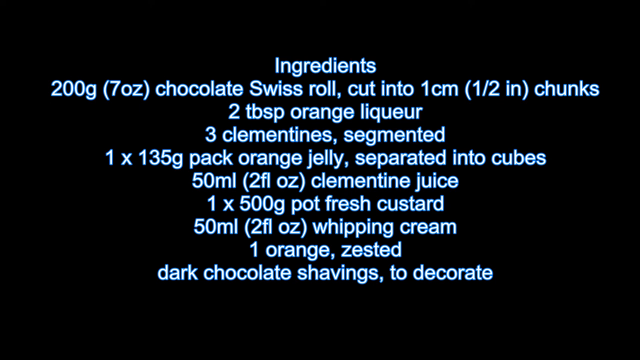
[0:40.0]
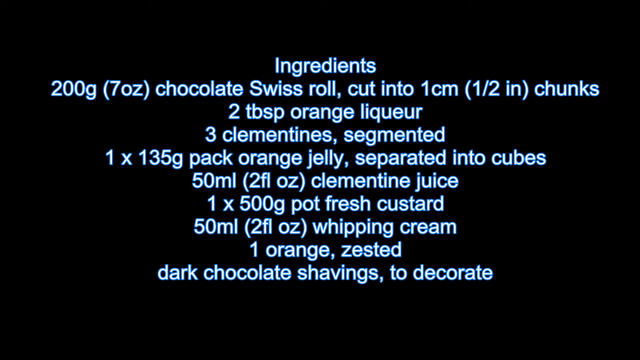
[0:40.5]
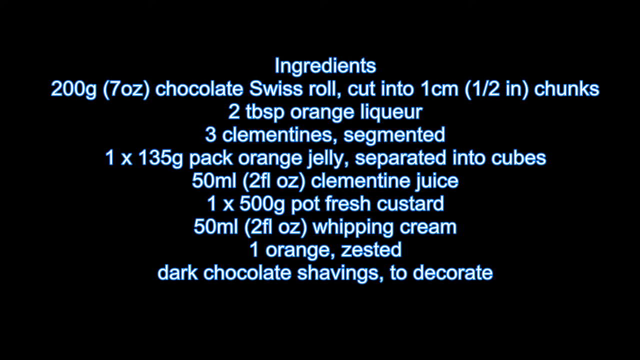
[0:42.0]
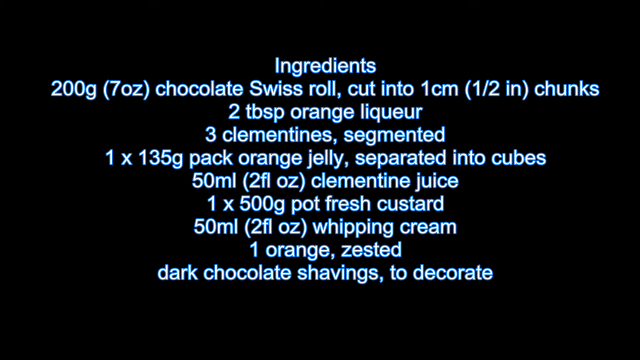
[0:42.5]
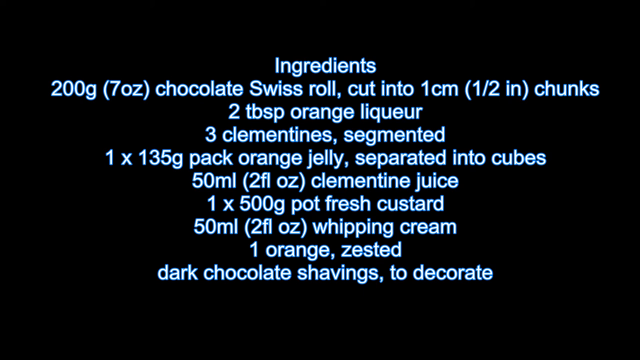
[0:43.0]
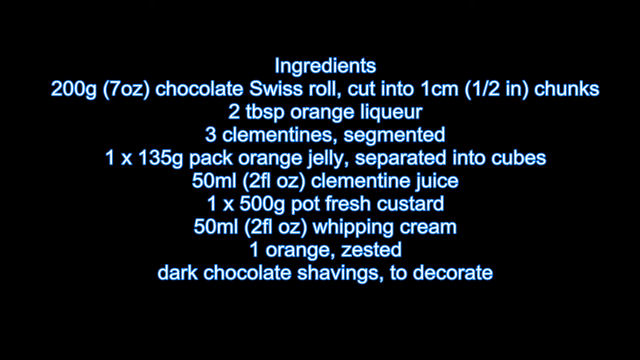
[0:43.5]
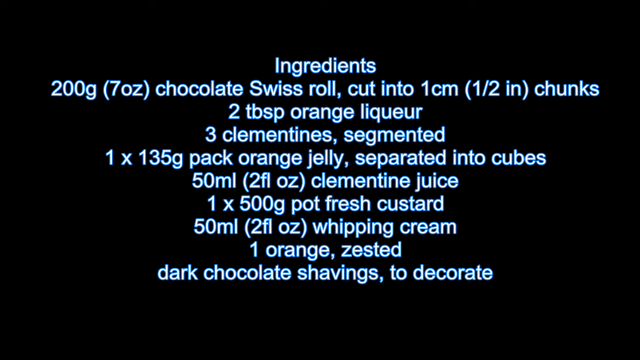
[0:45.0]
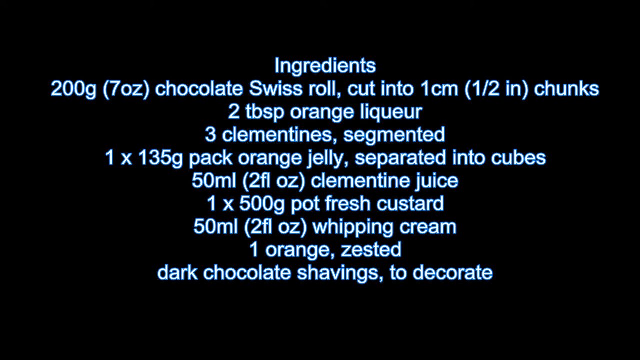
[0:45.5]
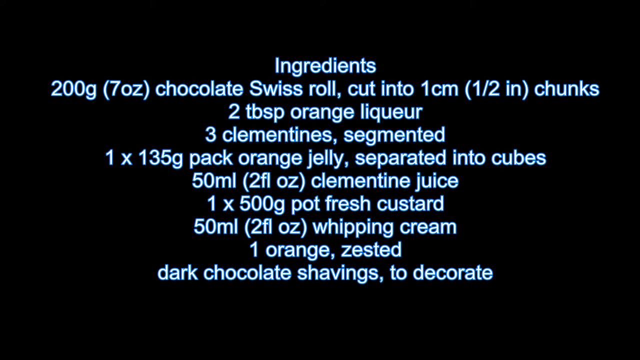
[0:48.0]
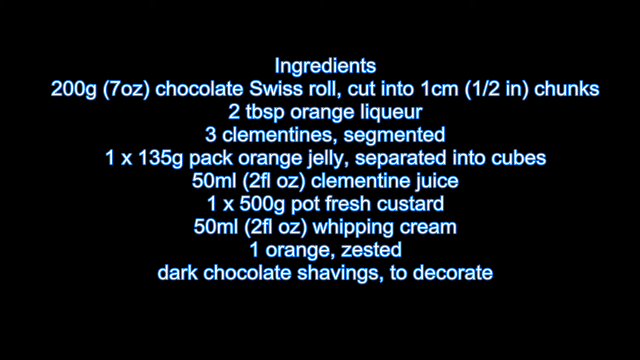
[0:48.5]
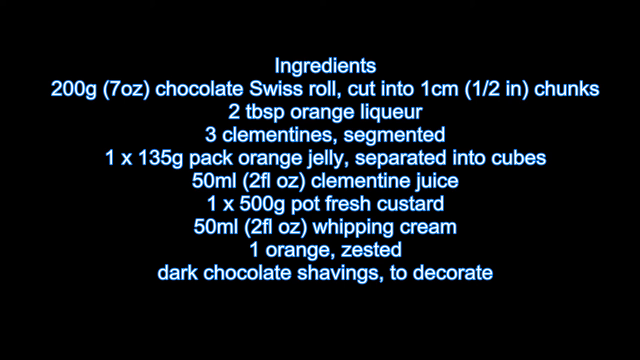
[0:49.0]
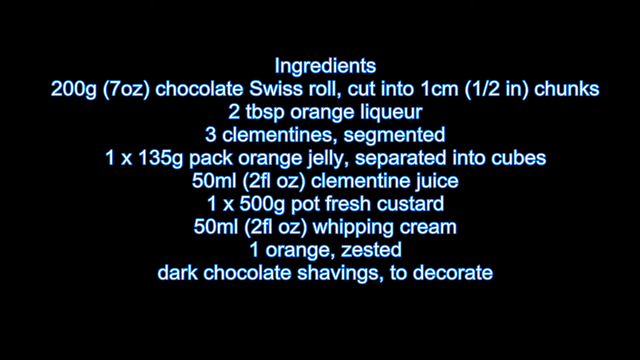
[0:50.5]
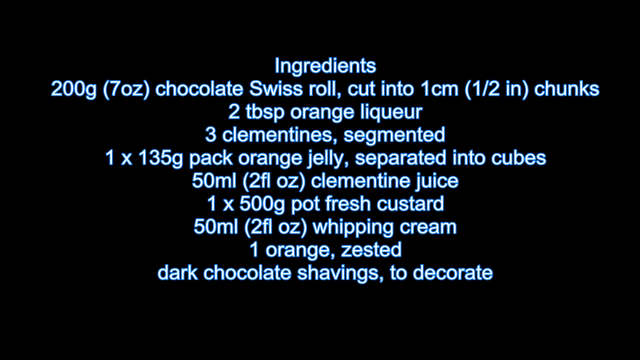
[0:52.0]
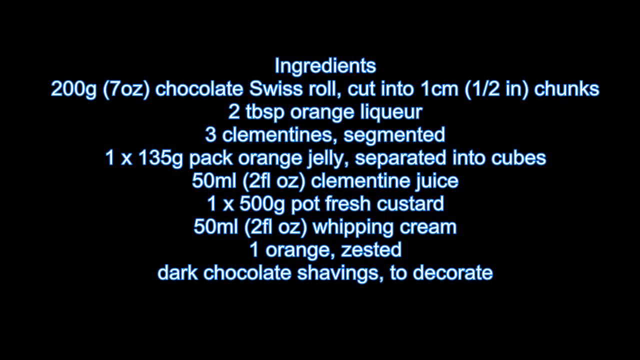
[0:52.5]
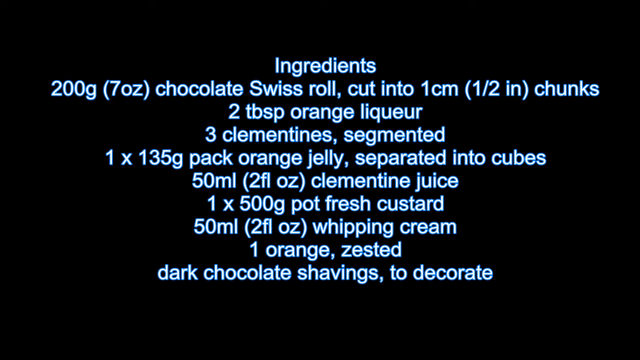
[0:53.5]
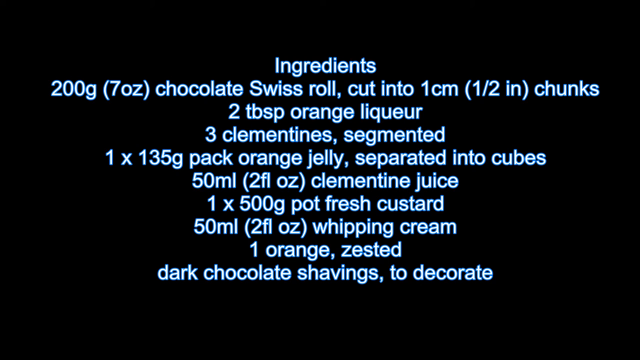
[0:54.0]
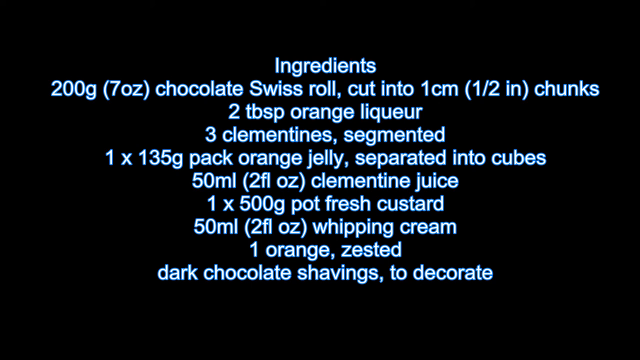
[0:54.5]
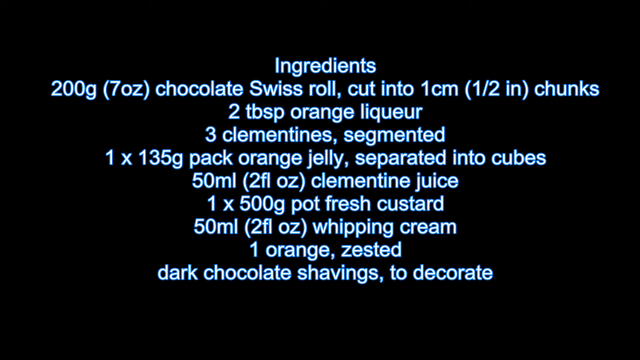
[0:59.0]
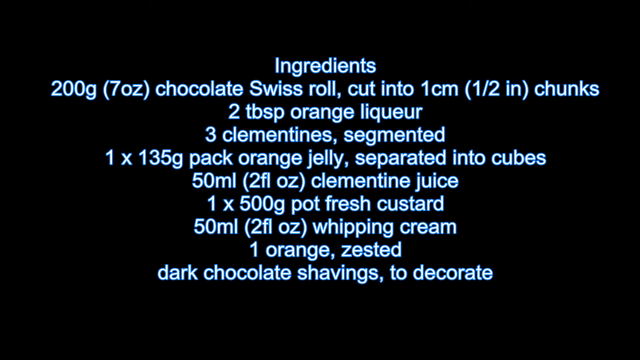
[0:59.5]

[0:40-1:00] A list of ingredients for the dish is shown, reading "200 grams or 7 ounces of chocolate Swiss roll cut into 1 centimeter or half inch chunks, 2 tablespoons of orange liqueur, 3 clementines segmented, 135 gram pack of orange jelly separated into cubes, 50 milliliters or 2 fluid ounces of clementine juice, 1 500 gram pot of fresh custard, 50 milliliter or 2 fluid ounces of whipping cream, 1 orange zested, and dark chocolate shavings to decorate." The shot is pretty much a still frame of this recipe, in blue lettering on a black background.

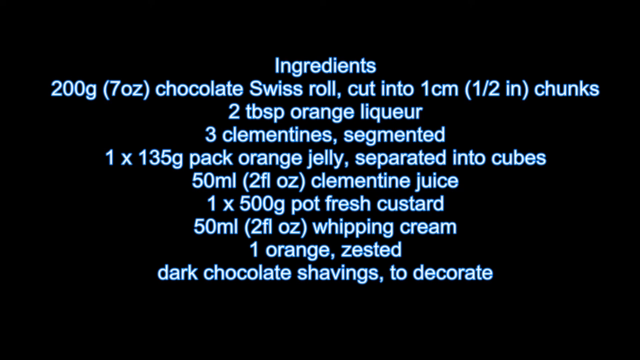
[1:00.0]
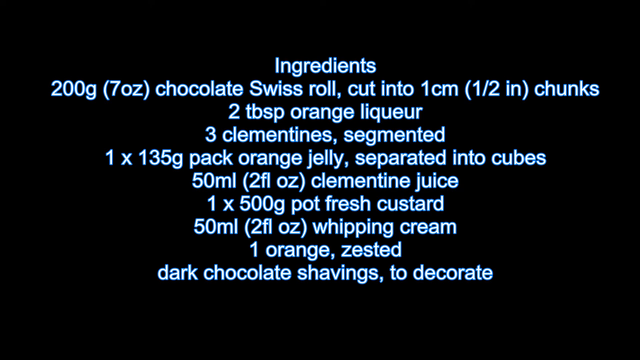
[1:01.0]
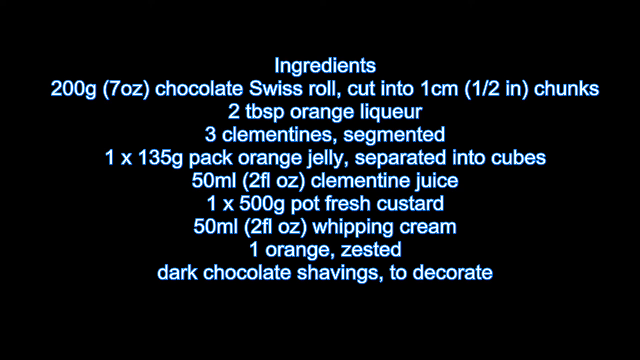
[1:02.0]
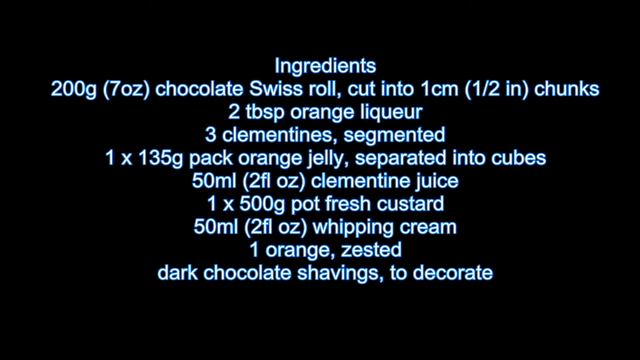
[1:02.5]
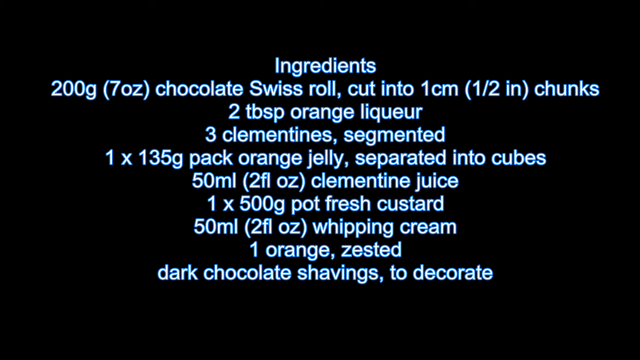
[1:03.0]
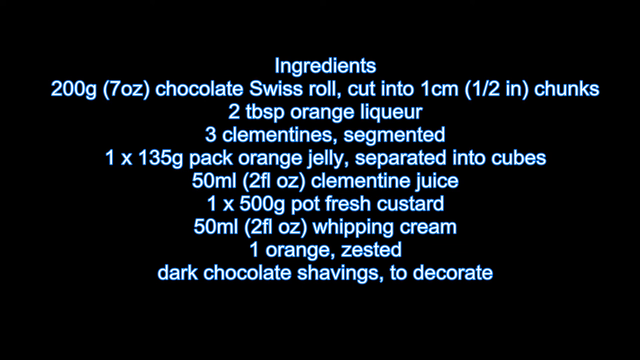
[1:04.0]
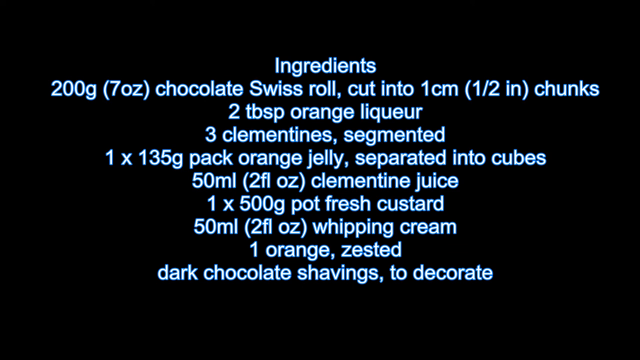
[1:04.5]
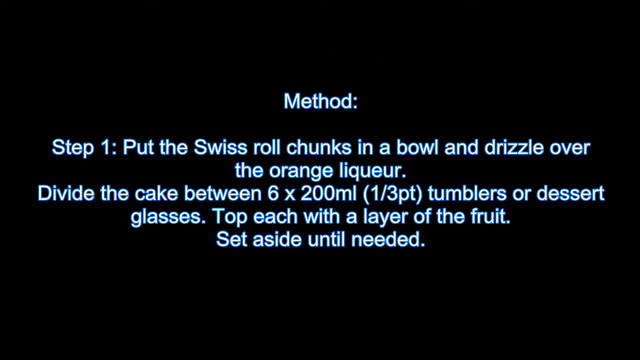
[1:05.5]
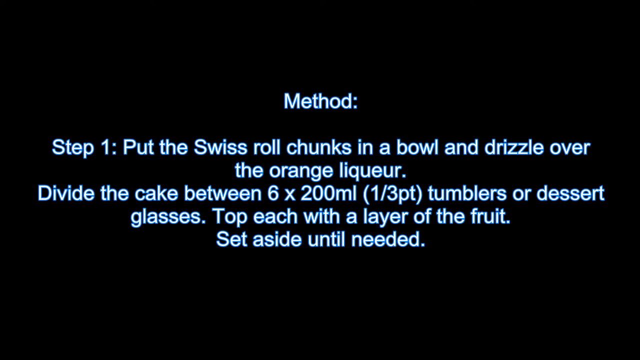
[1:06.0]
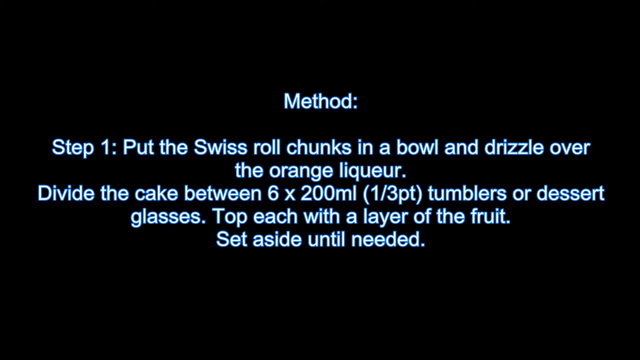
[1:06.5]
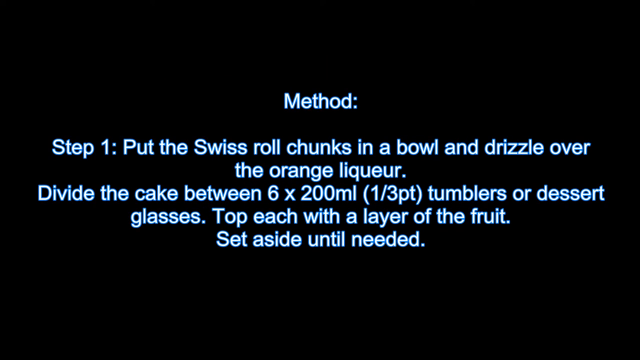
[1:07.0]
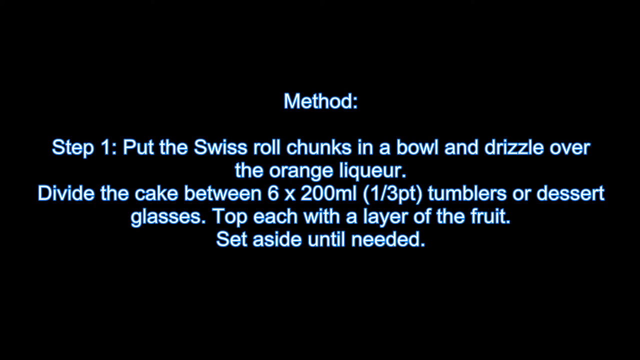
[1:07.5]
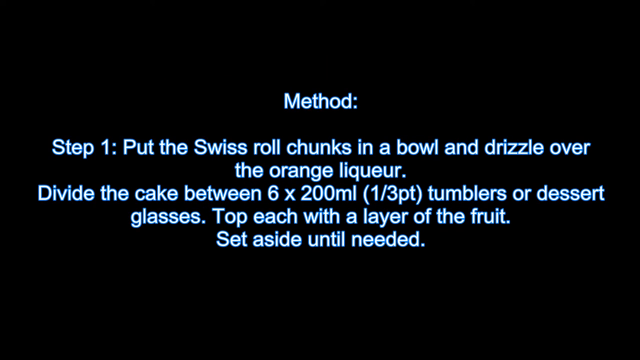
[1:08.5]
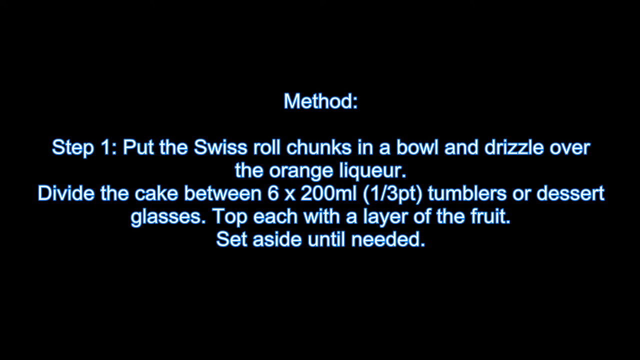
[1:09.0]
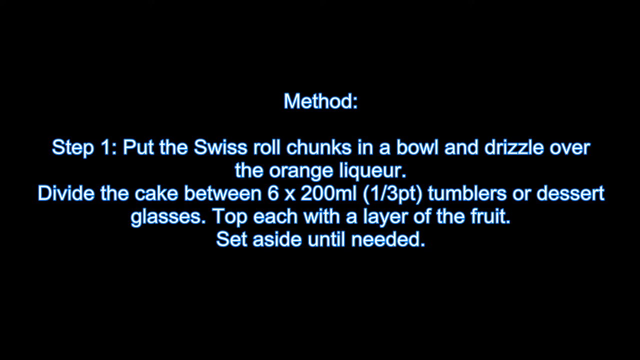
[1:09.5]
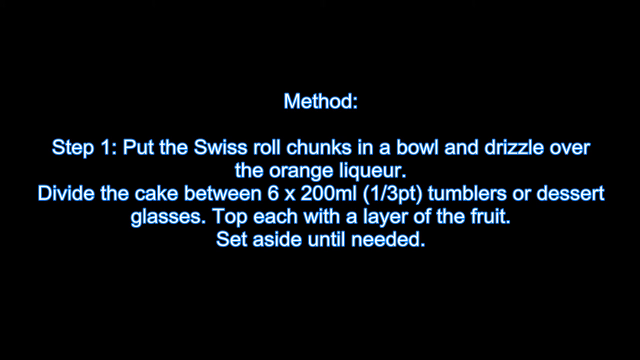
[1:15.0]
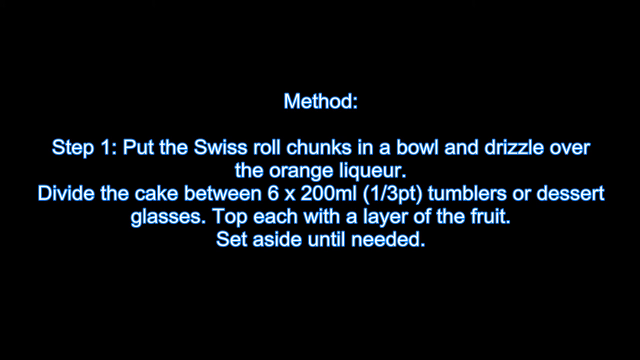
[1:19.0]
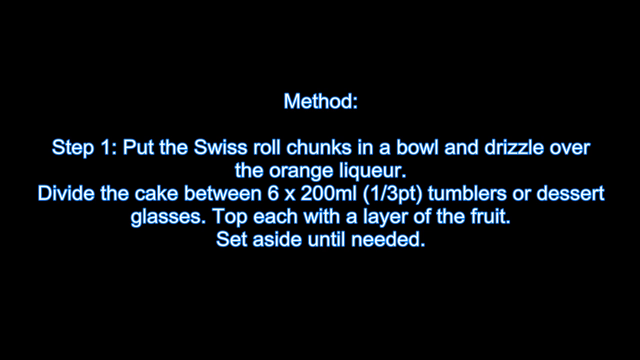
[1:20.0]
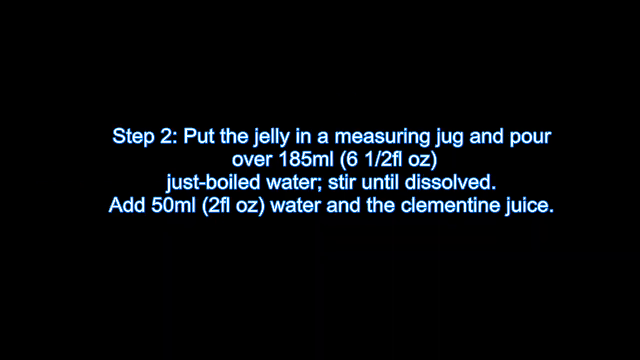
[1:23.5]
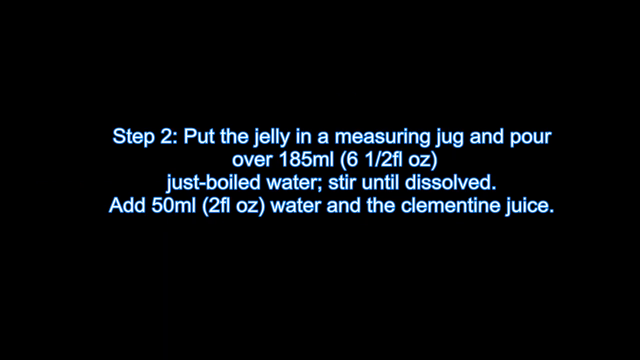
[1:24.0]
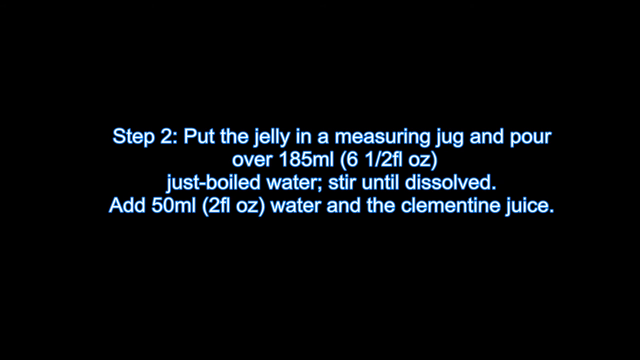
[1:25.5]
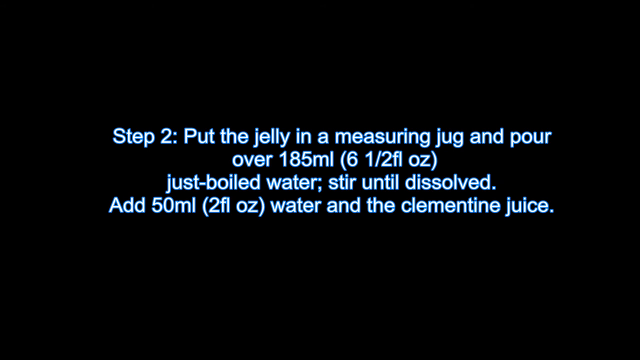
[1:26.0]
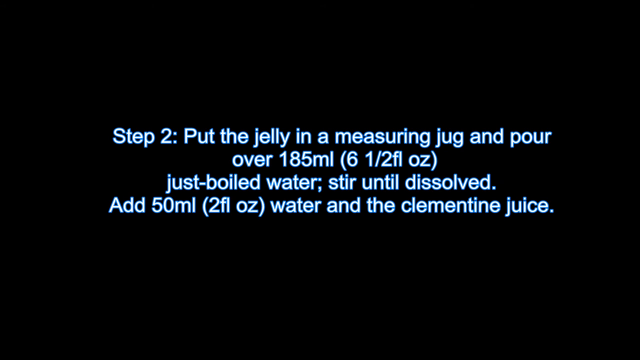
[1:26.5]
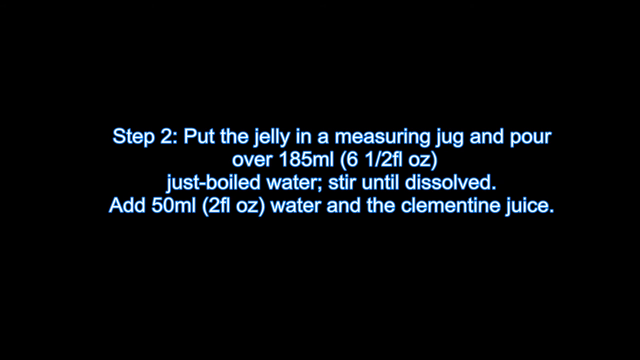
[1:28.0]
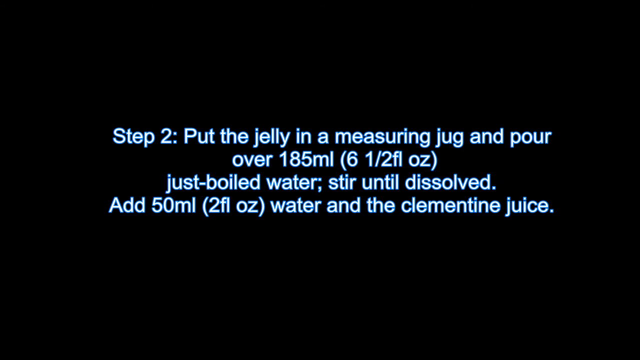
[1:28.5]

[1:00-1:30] The recipe continues with the instructions. Step 1 reads "put the rolled chunks in a bowl and drizzle over the orange liqueur" and "top each with a layer of the fruit, set aside until needed." Step two reads "put the jelly in a measuring jug and pour over 185 milliliters".